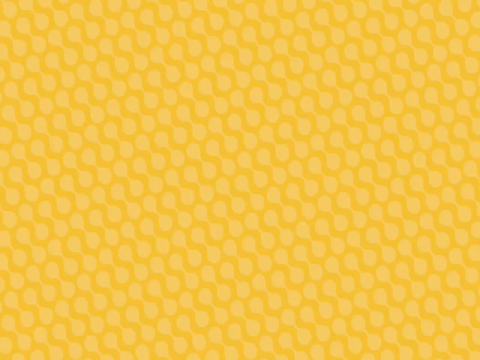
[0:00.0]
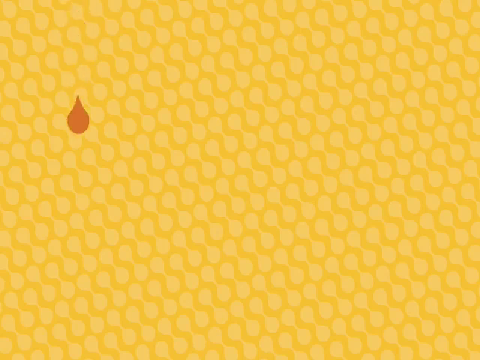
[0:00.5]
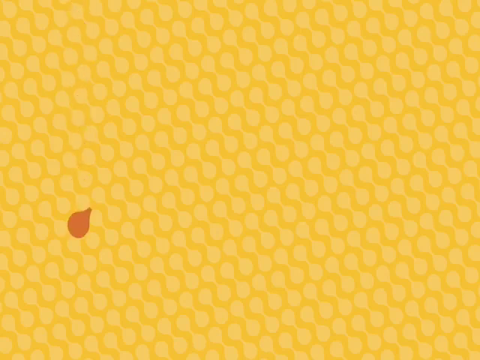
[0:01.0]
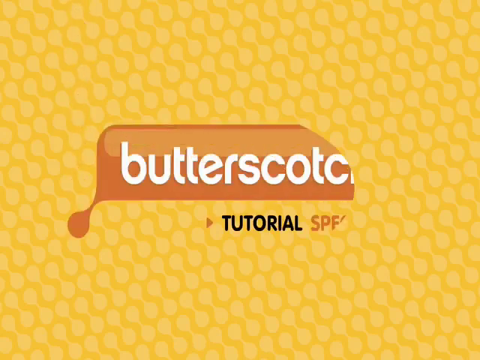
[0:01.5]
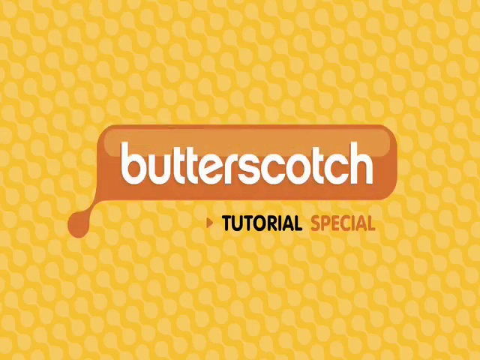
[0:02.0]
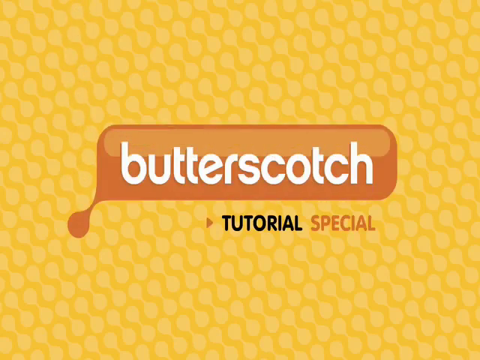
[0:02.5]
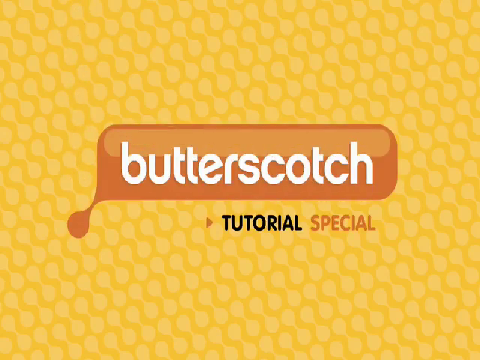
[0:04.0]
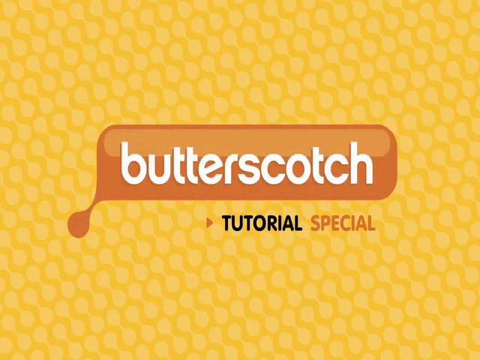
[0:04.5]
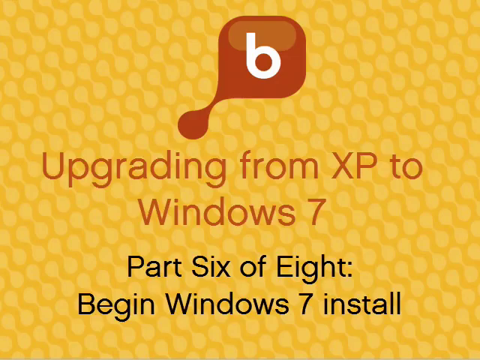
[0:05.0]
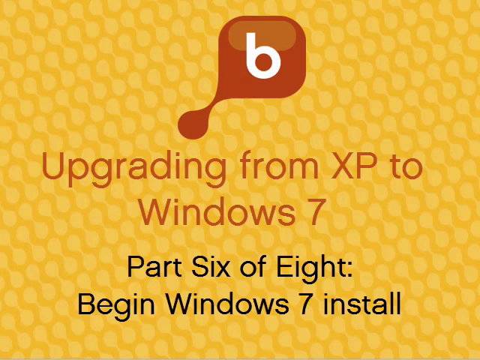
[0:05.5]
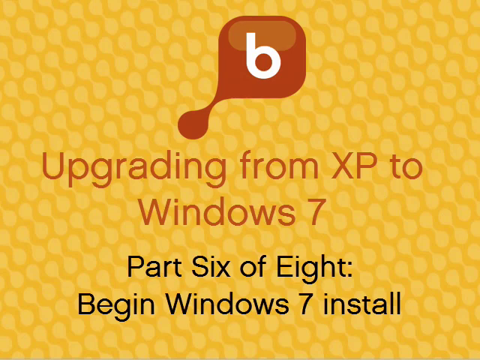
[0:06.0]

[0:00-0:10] The whole background is yellow, and a drop comes down and opens up to a rectangular word that says "butterscotch," with "tutorial special" underneath. The word "butterscotch" is in all lowercase letters, "tutorial" is in all capital letters, in smaller print and in black, and "special" is in a brownish orange color that almost looks like the color of butterscotch. Next, a B appears in a square with curved edges at the top, with a little drop coming out of it on the left. The text reads "upgrading from XP to Windows 7. Part six of eight, begin Windows 7 install."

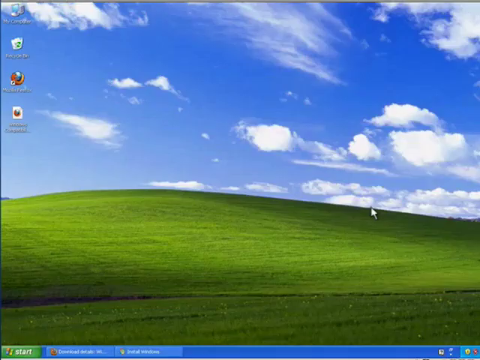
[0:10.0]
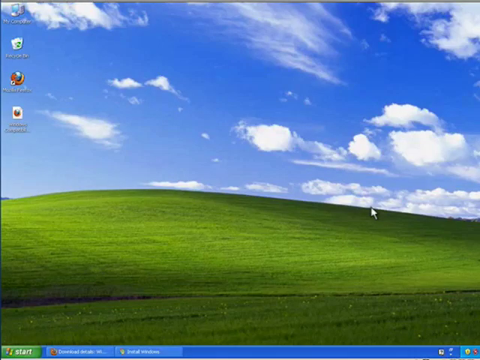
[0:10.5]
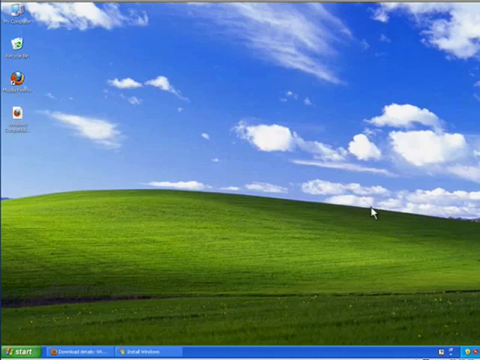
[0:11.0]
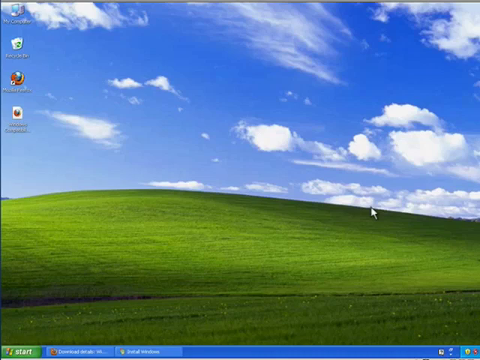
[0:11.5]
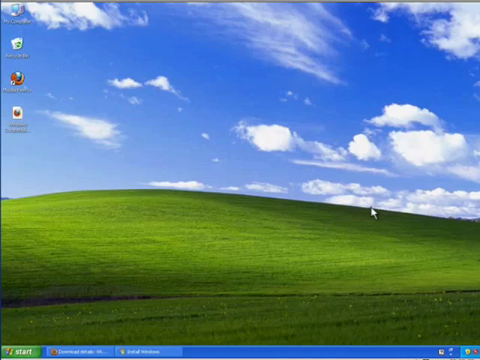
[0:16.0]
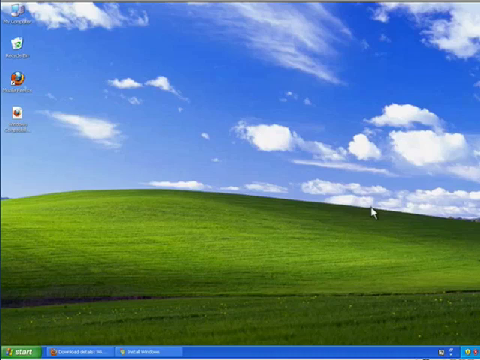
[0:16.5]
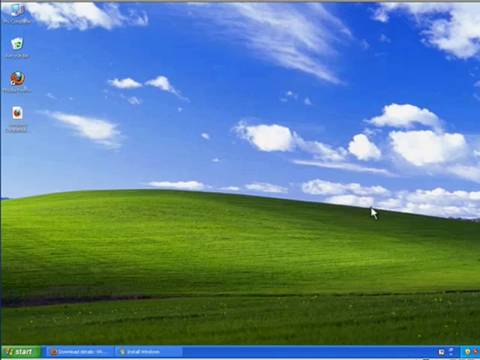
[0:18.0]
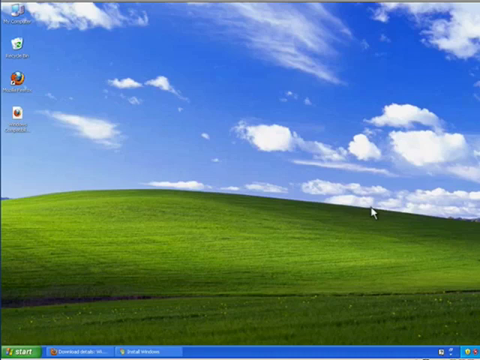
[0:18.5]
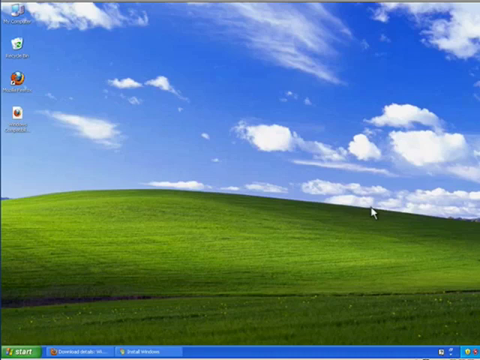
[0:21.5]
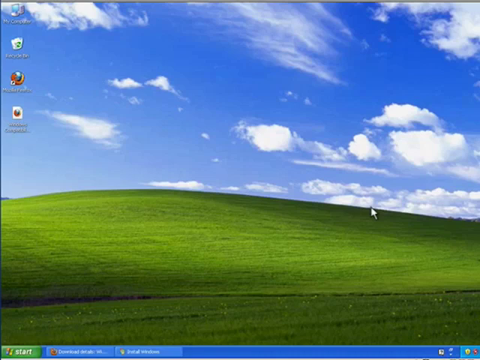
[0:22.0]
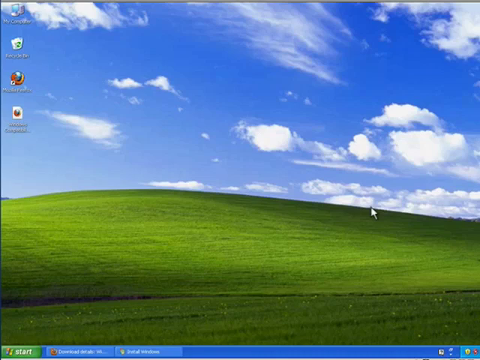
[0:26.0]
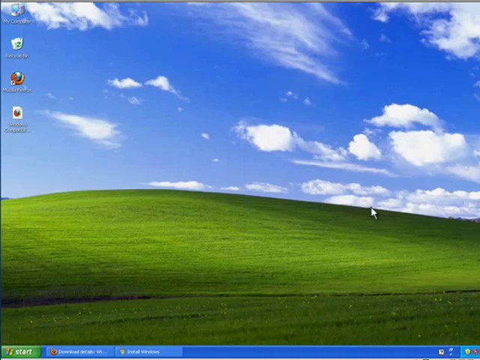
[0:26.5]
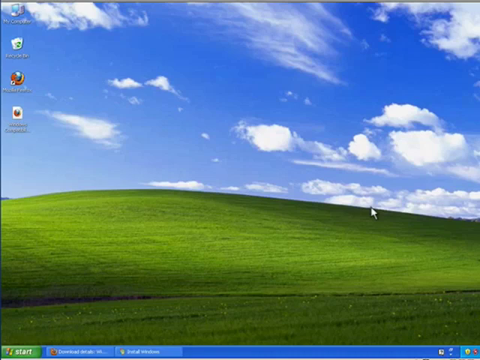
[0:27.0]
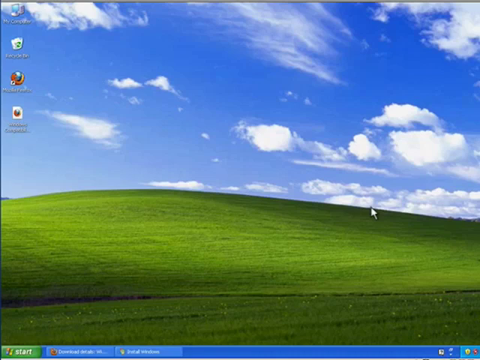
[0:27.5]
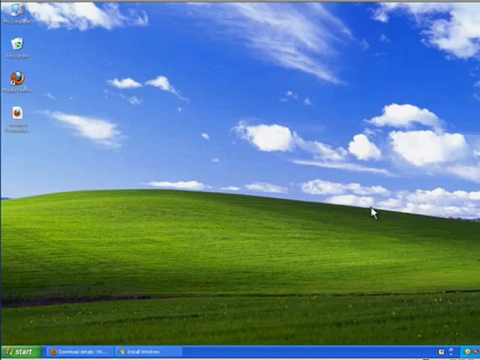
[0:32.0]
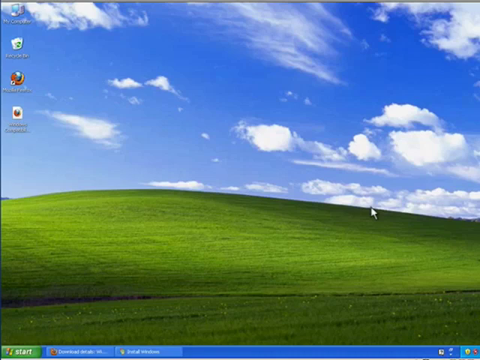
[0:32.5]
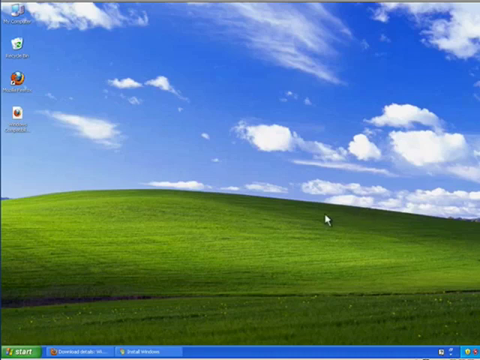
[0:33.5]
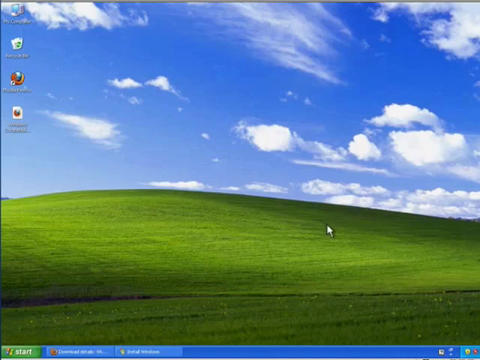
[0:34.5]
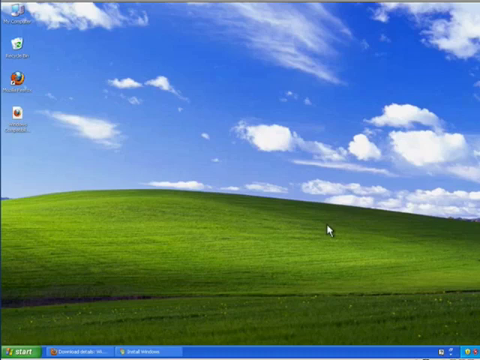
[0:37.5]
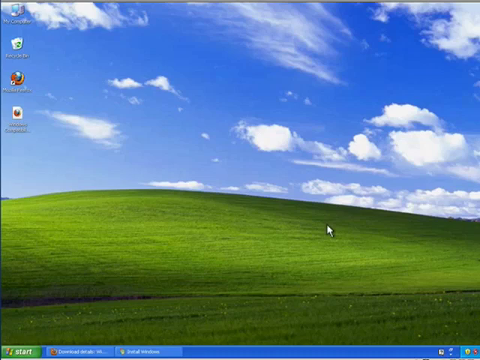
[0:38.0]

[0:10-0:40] A computer home page shows a background of a very grassy field with a blue sky and fluffy white clouds. Four icons are at the top of the page: Maxilla Firefox, a recycling bin, my computer, and one in the lower left area that is hard to see. A start button is in the lower left-hand corner, and the weather is in the lower right-hand corner. The very bottom section has only two tags: one is downloads and the other is too blurry to read. The screen is blank, with no tabs open to the internet yet, showing the green hills, blue sky and white fluffy clouds in the background.